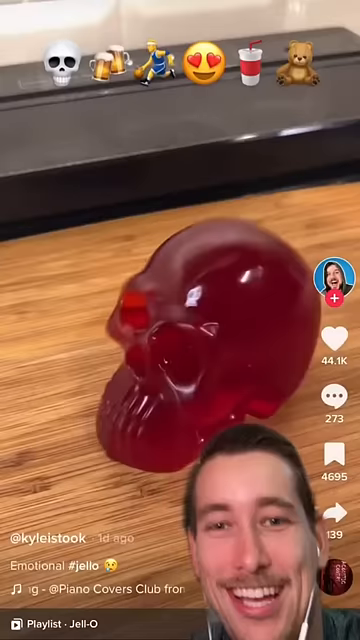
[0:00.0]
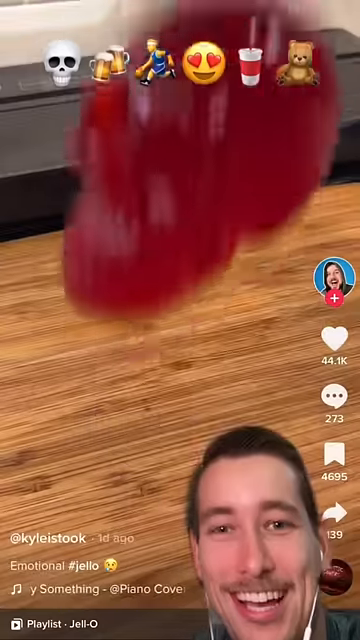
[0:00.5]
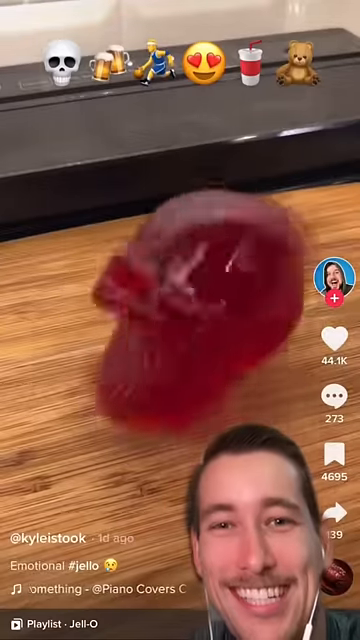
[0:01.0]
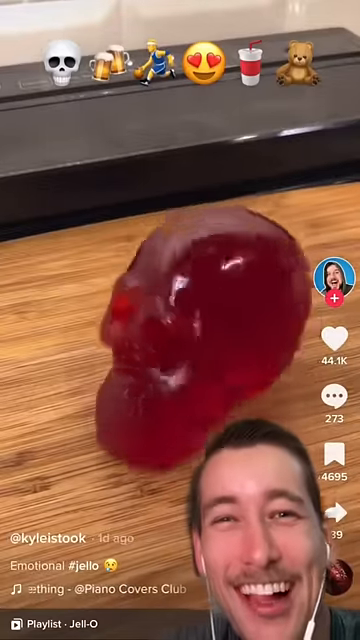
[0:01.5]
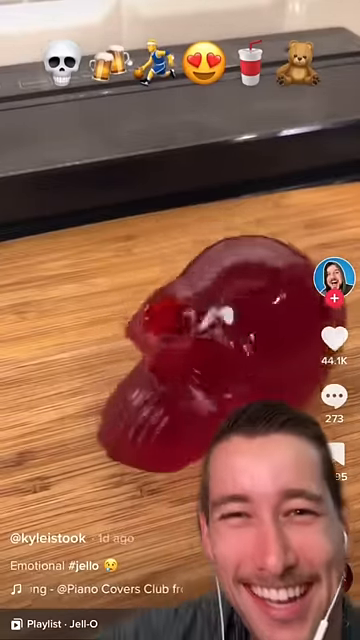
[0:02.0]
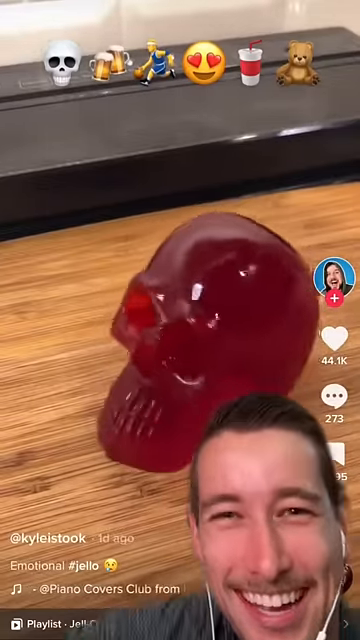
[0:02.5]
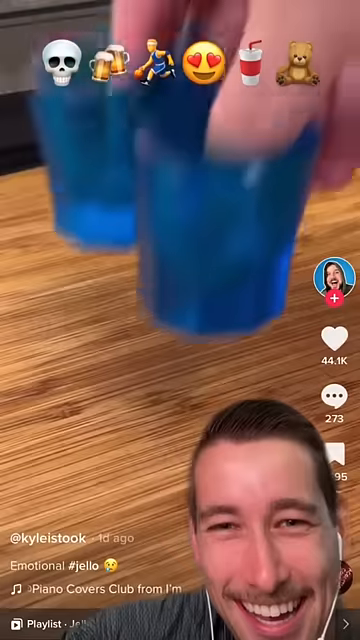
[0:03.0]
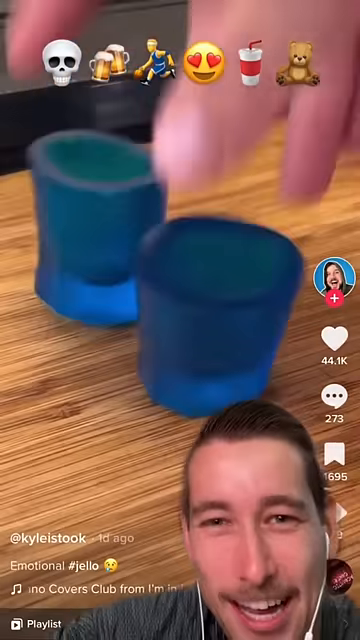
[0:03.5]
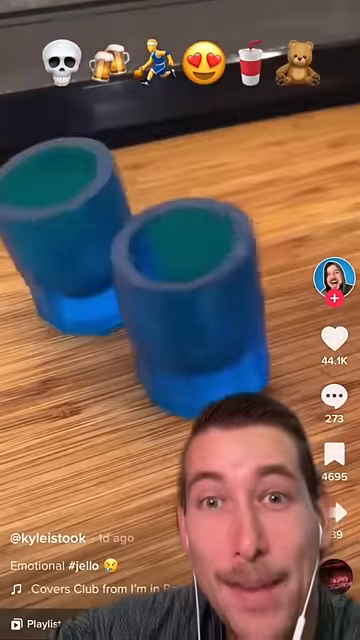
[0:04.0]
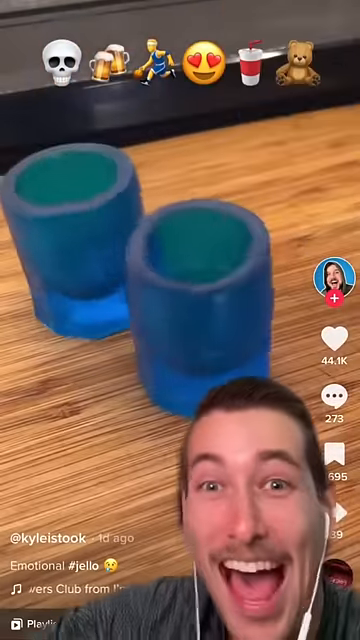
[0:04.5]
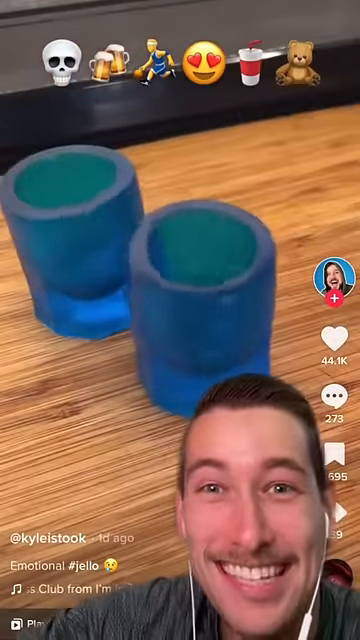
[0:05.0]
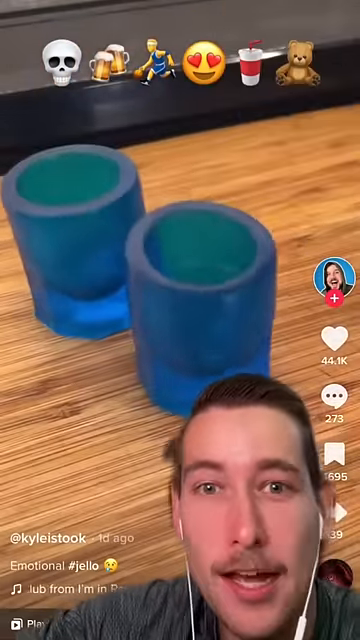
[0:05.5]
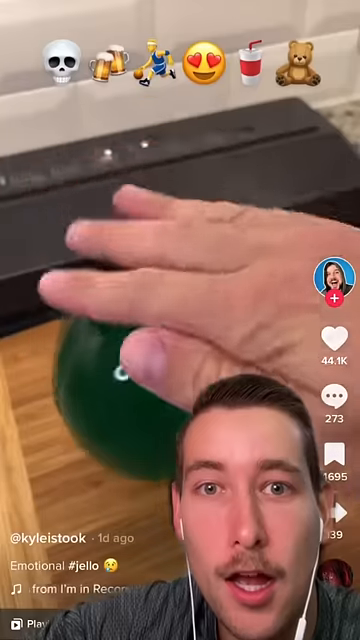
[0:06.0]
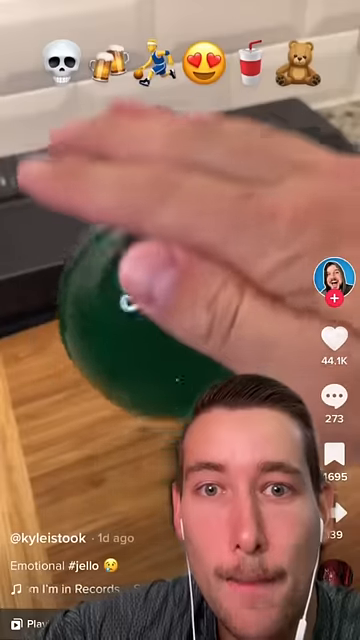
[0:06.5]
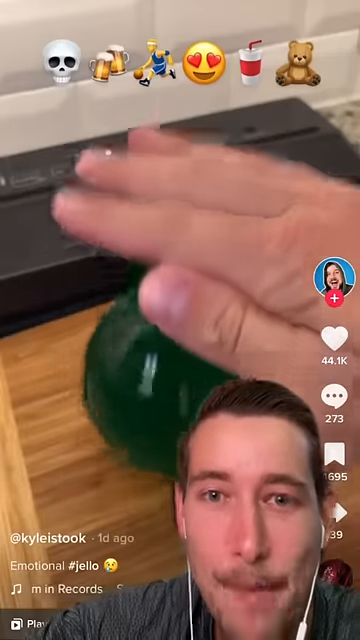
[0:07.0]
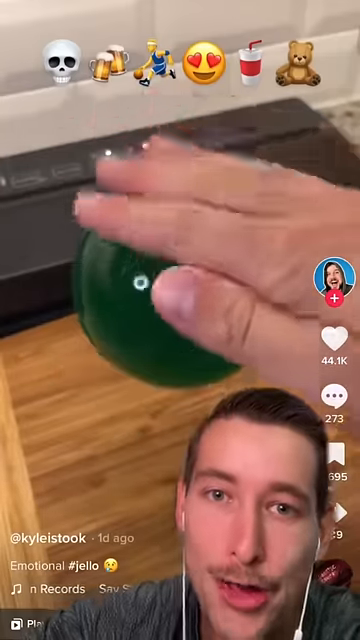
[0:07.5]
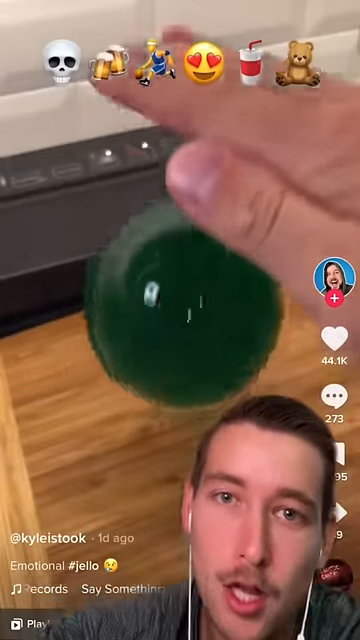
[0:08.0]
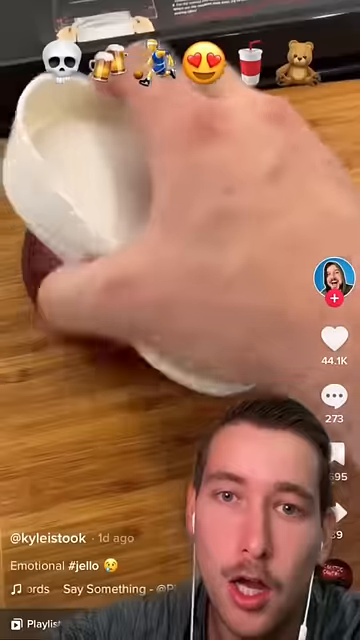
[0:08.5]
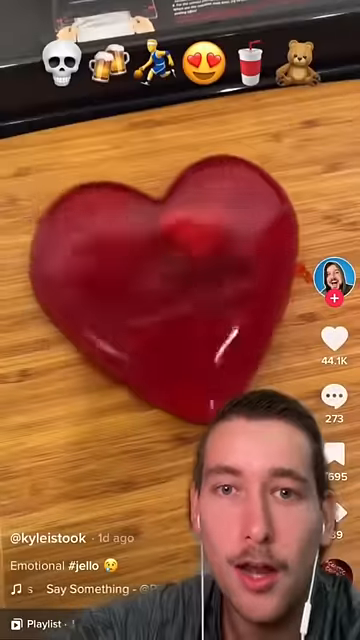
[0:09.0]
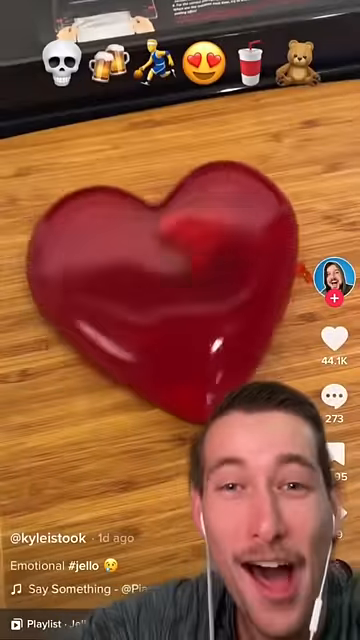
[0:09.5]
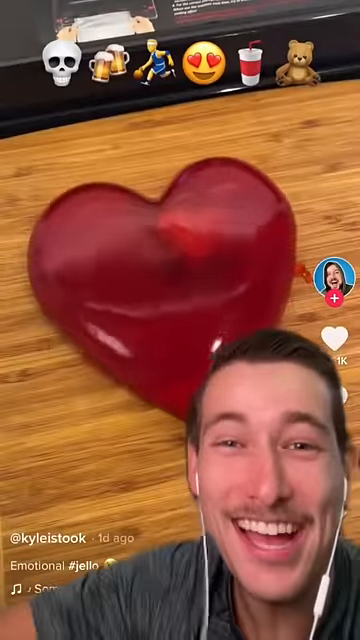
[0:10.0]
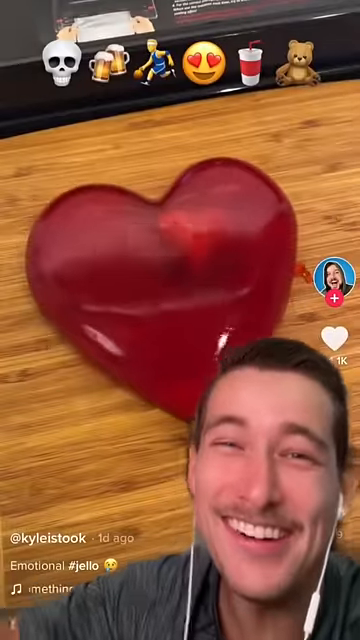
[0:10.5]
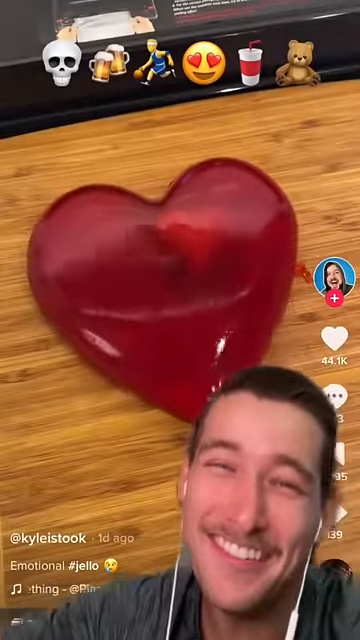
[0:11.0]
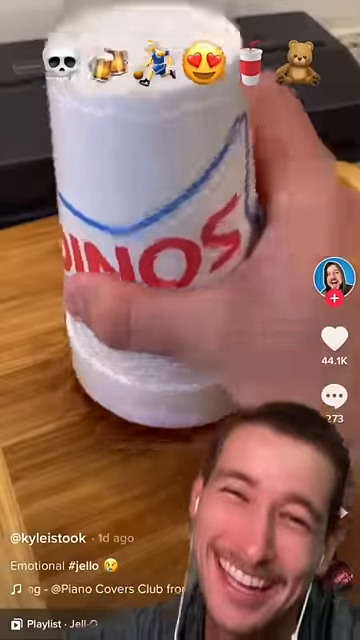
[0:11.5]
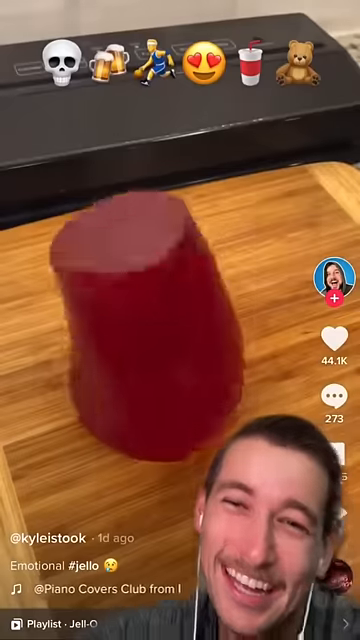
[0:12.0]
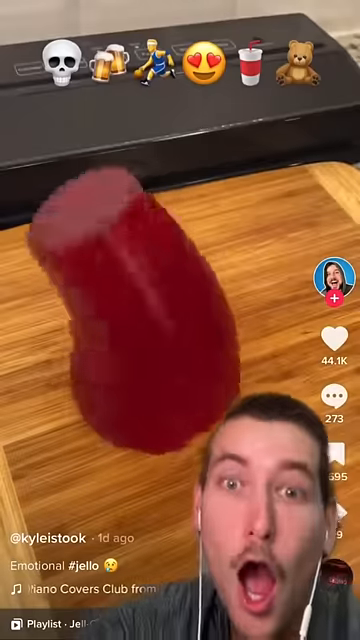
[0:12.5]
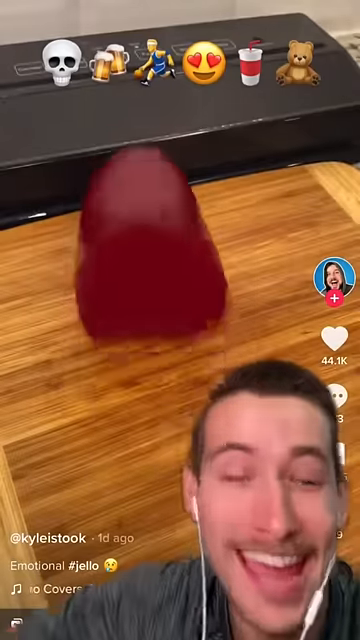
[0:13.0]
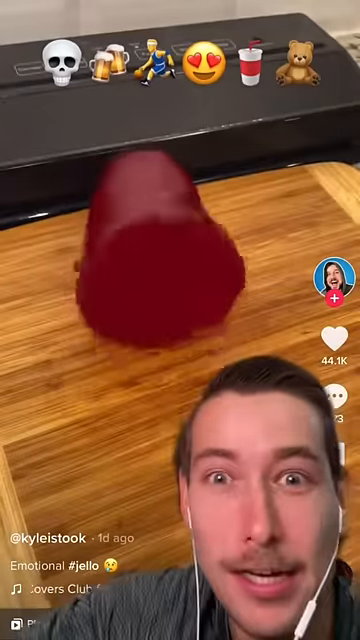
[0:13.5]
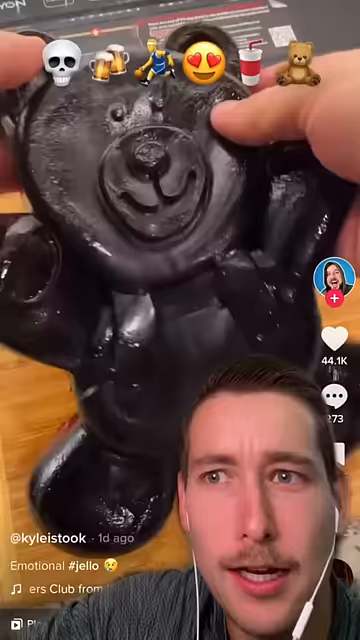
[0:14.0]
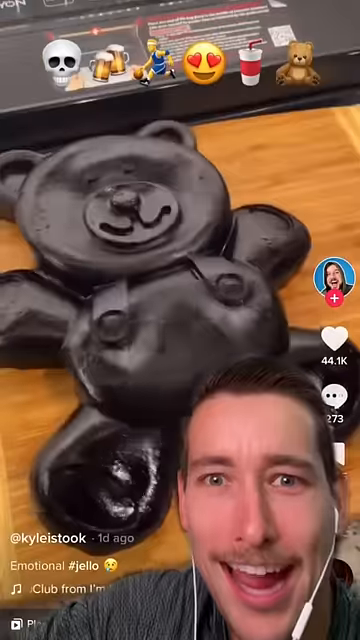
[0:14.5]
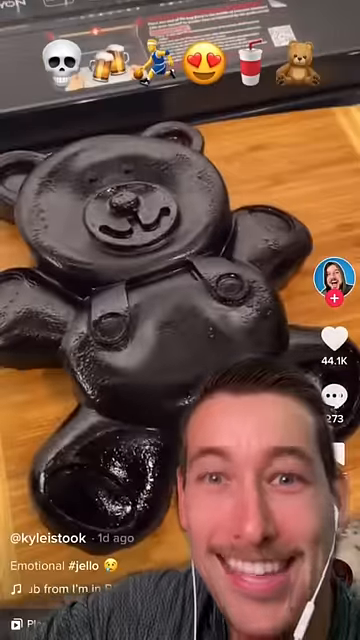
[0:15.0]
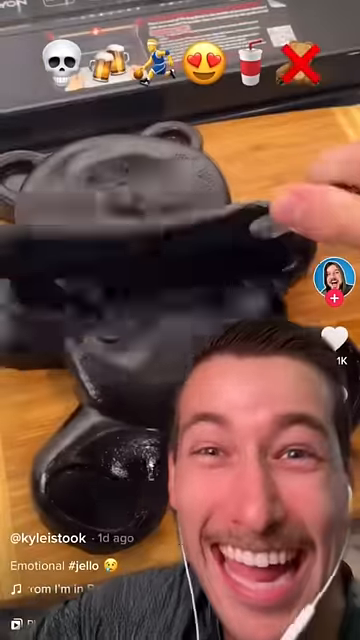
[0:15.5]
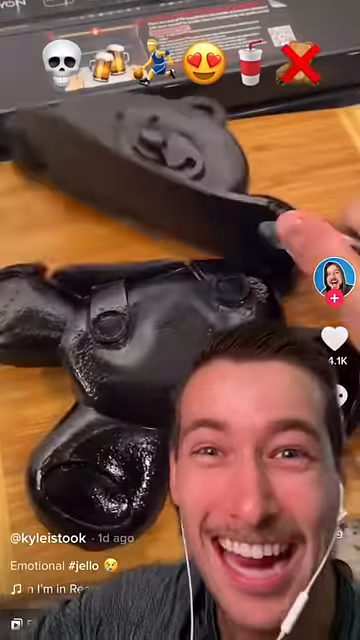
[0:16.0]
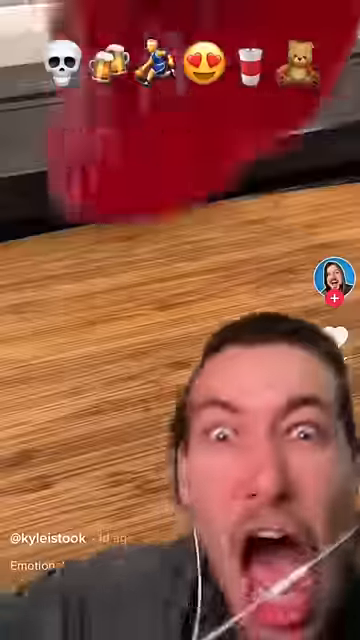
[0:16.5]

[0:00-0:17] A man shows off a series of wiggly jello creations that someone has made. He appears minimized in the lower right corner of the frame, wearing wired headphones that are kind of like earbuds, and as he talks he laughs and makes wild facial expressions to go along with the creations. There is a green ball that he is bouncing, a wiggly red heart, and a cup that something has been dumped out of. A very large black teddy bear appears, and someone takes a knife and kind of chops the teddy bear's head off while the man makes a kind of funny facial expression. Two little shot glasses formed out of blue jello are plopped down and wiggle back and forth. Emojis also appear as a detail in the video: something like a skull shape, beer, a basketball player, a heart emoji, a smiley face, a teddy bear and a cup, seemingly matching the things made out of jello.